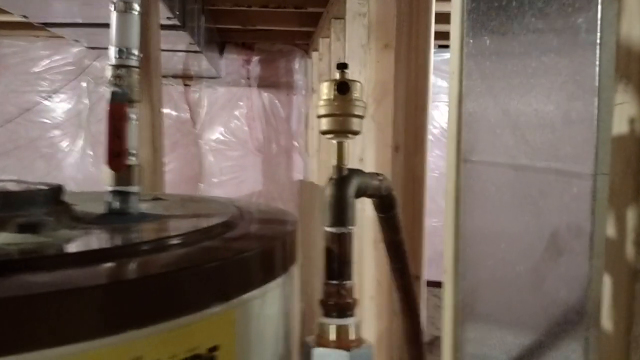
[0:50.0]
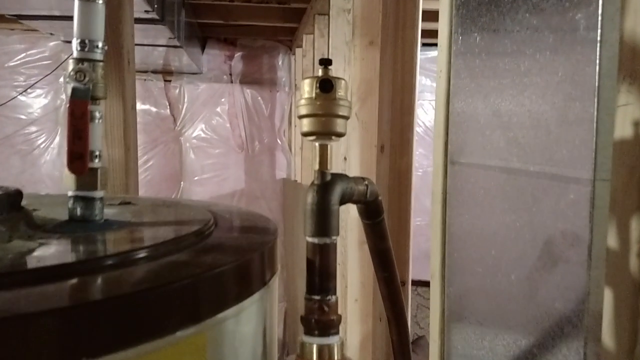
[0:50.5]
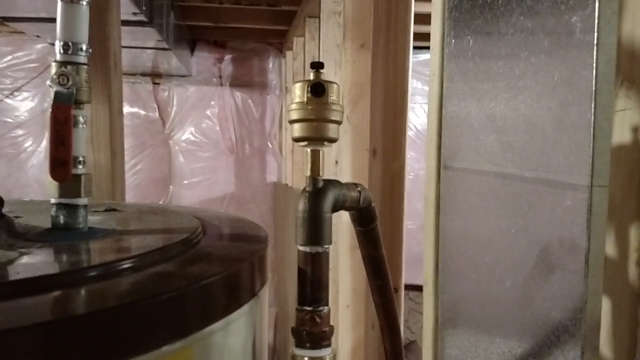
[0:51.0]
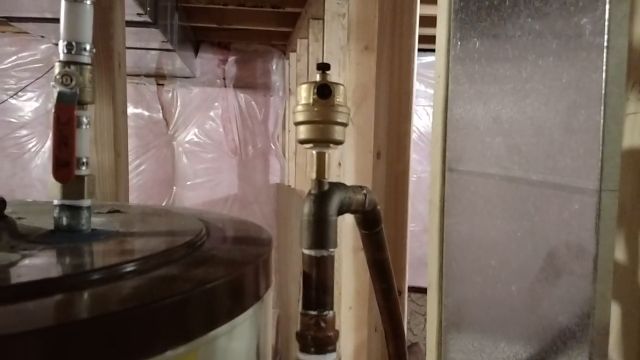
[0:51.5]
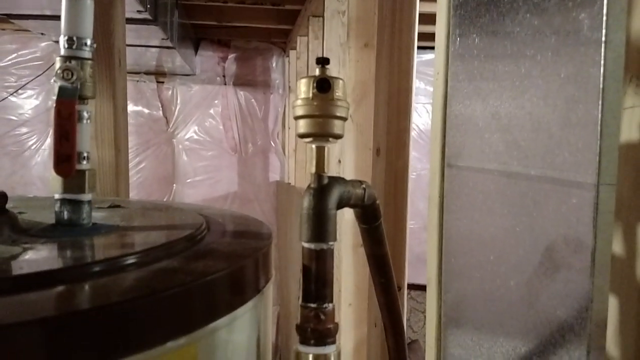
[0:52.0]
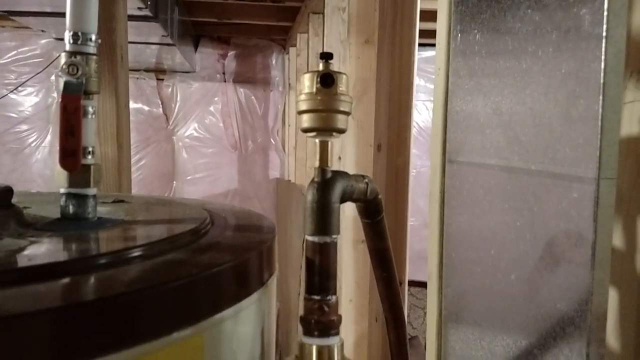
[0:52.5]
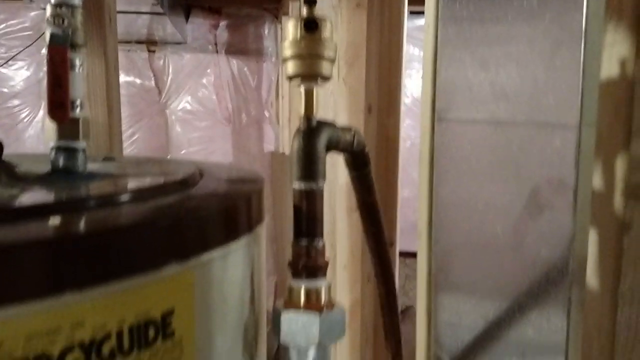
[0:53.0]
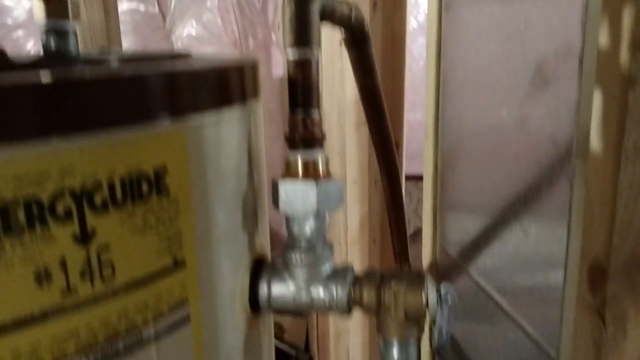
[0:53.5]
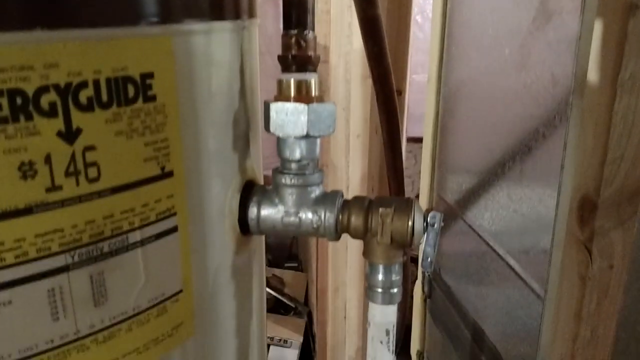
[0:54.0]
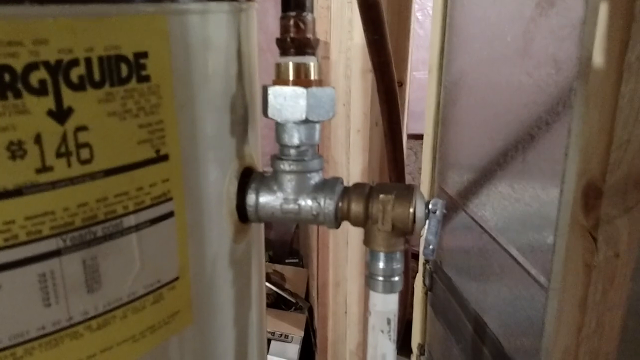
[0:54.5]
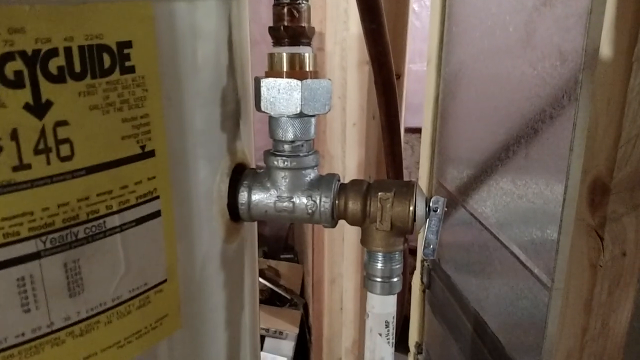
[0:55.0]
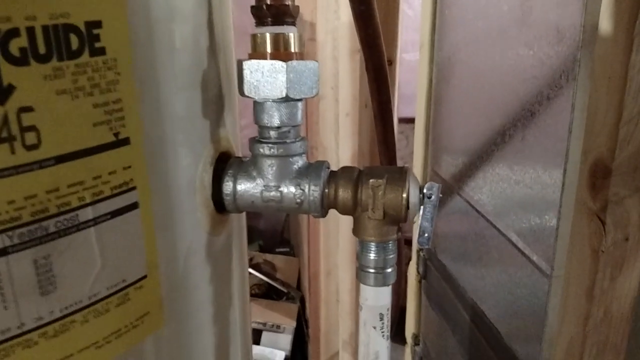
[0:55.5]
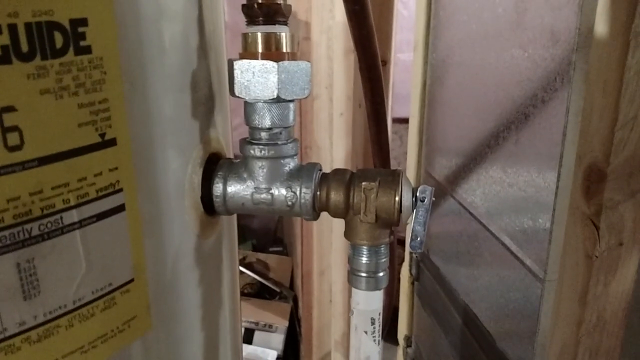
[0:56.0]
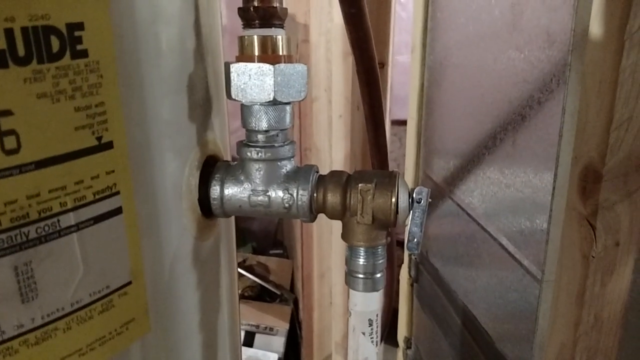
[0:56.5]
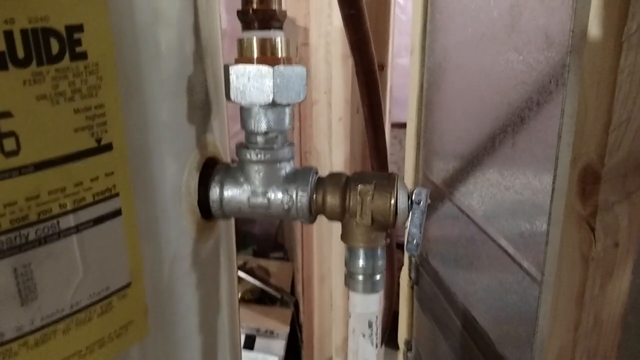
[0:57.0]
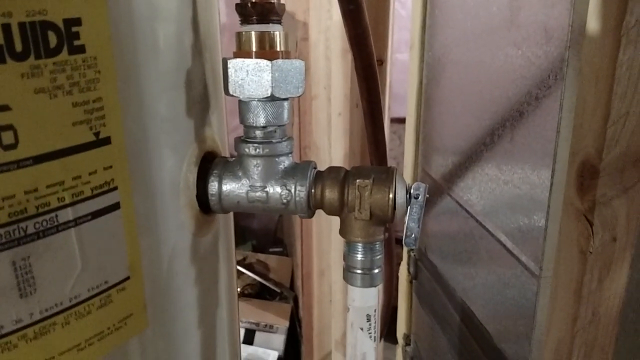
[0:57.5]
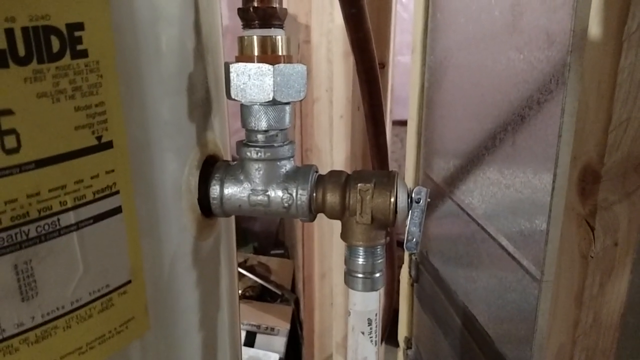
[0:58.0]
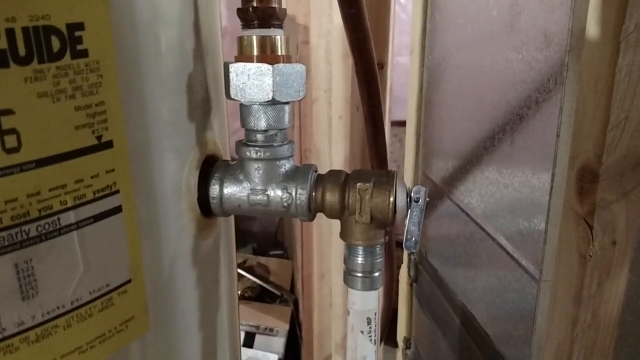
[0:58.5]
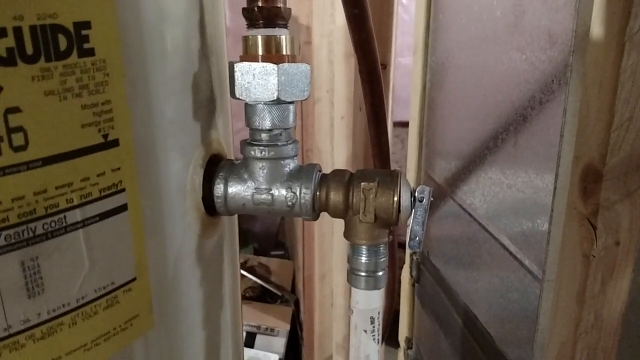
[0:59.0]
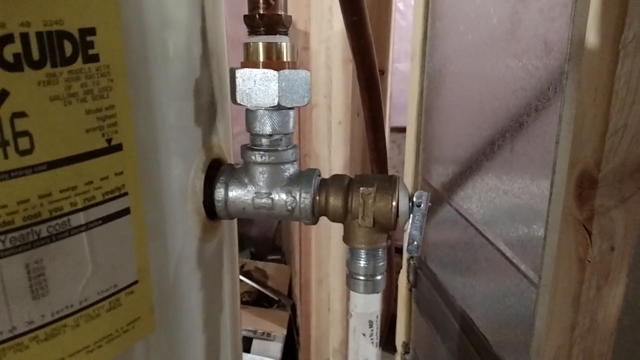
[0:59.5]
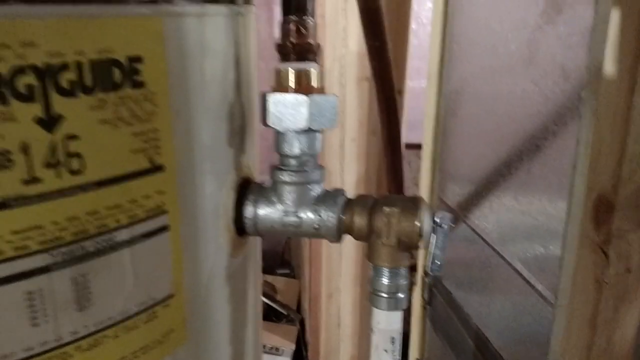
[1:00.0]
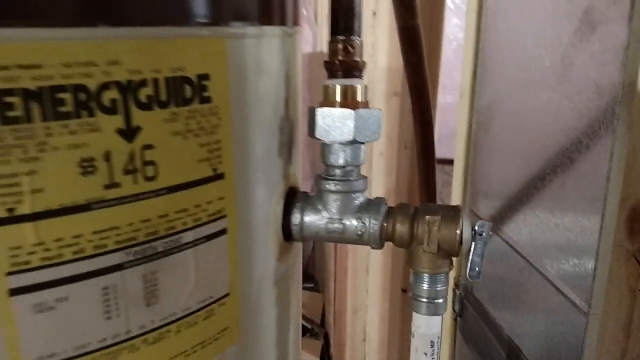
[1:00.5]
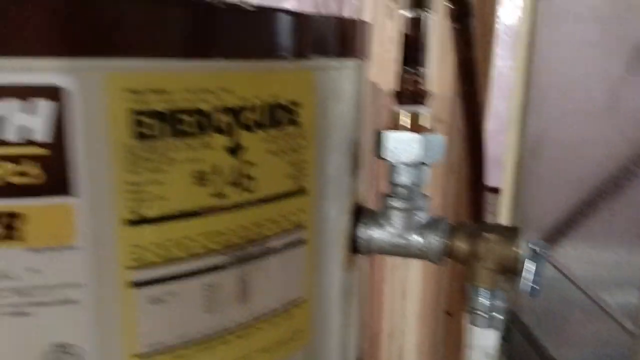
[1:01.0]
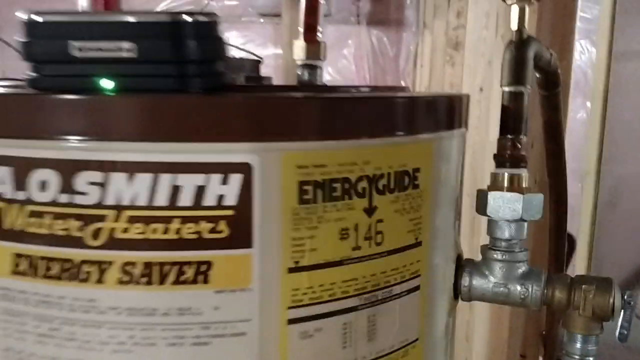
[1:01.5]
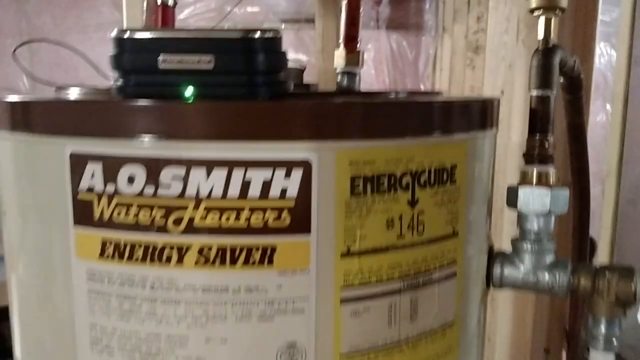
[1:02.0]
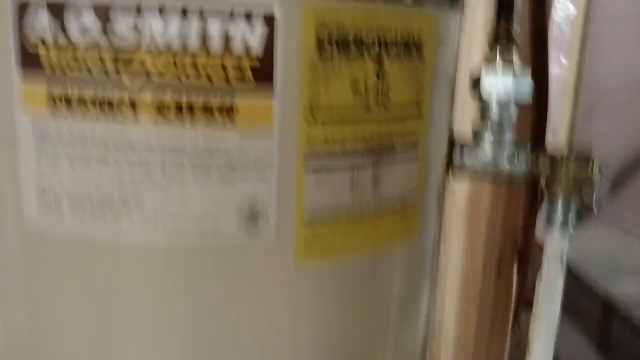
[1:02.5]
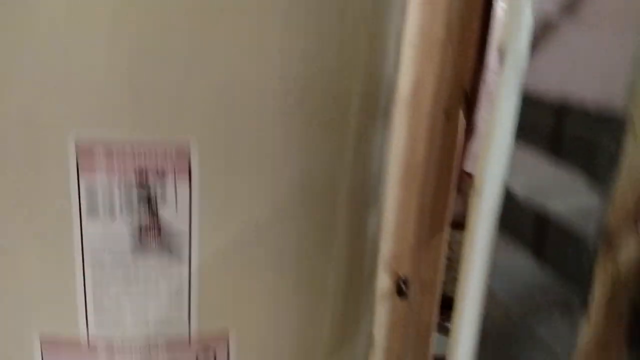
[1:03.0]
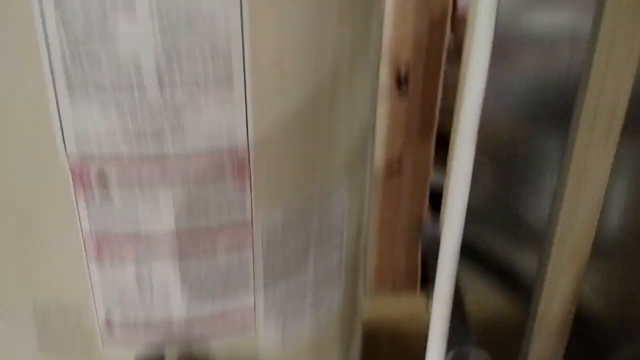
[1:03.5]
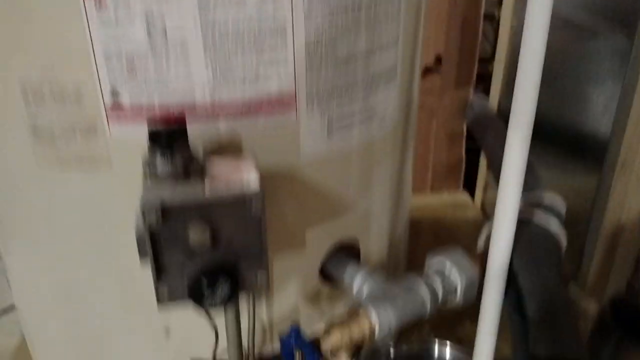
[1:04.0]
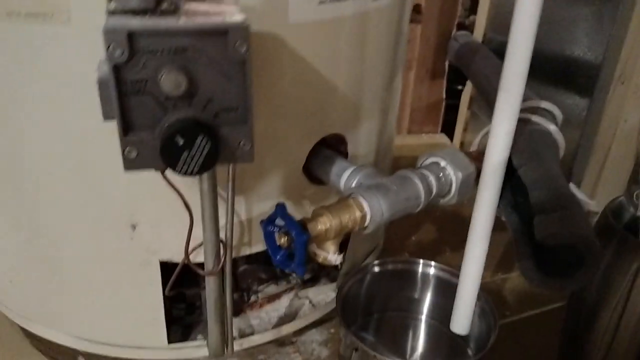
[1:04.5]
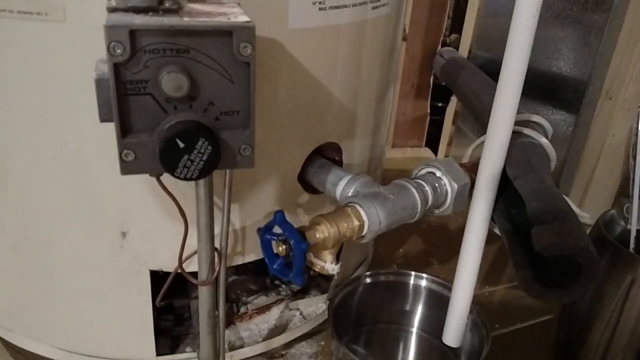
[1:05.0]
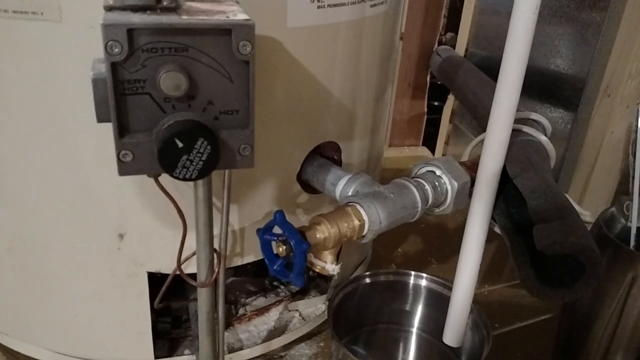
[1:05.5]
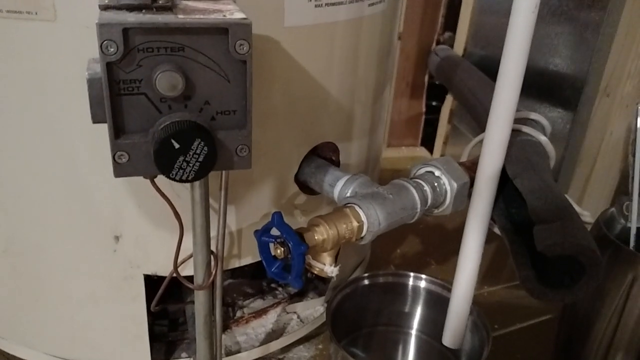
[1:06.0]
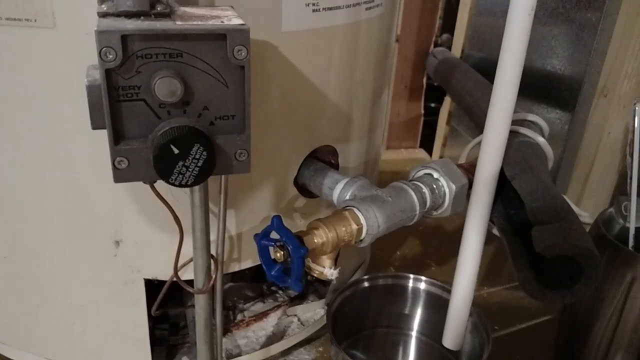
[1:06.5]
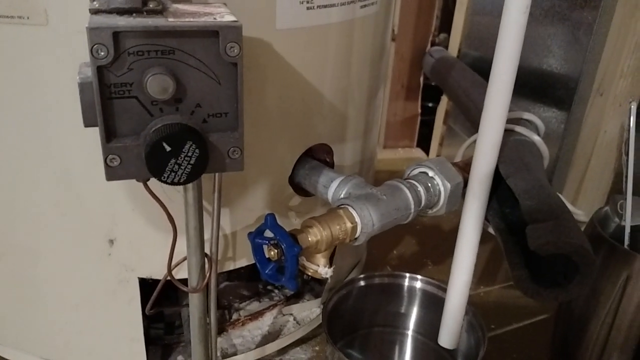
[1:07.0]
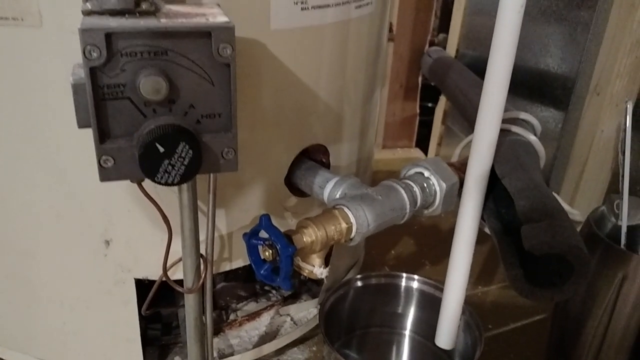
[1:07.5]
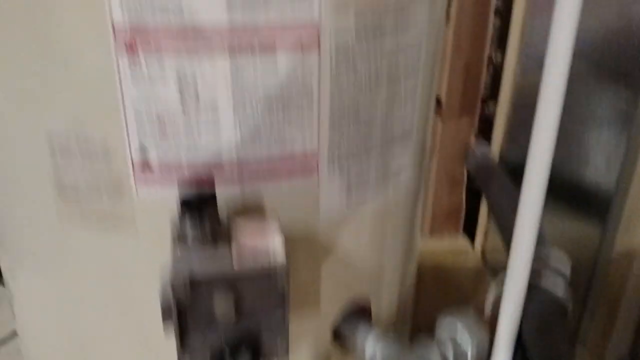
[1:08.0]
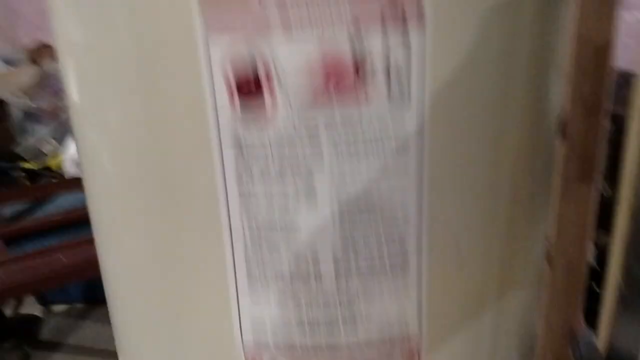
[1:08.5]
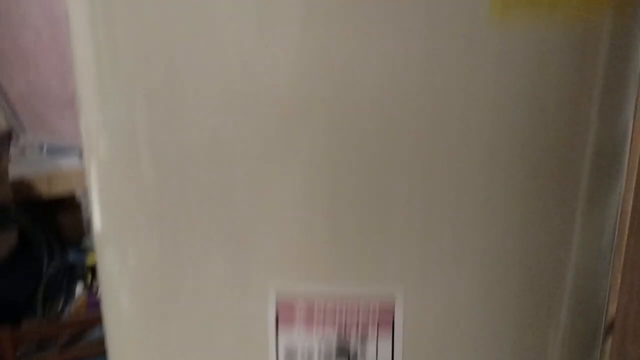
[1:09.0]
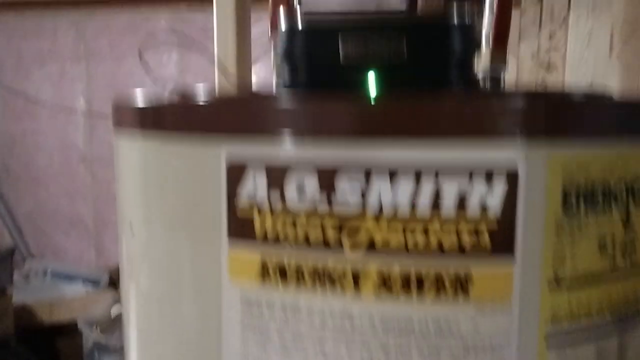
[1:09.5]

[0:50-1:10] The fireplace is in a room that is not clean; the room is dirty. The fireplace is a very old model with a chimney, and there is a well-lit fire in it. Pipes are connected at the back of the fireplace; they are a bit long and connect to a tank. The tank looks like a geyser but is not one; it is the energy source for the fire and seems to contain gas. Pipes are connected at the top and at the bottom of the tank. The tank is branded and works as an energy saver. A small black box on top of the tank has a blue light in the middle.